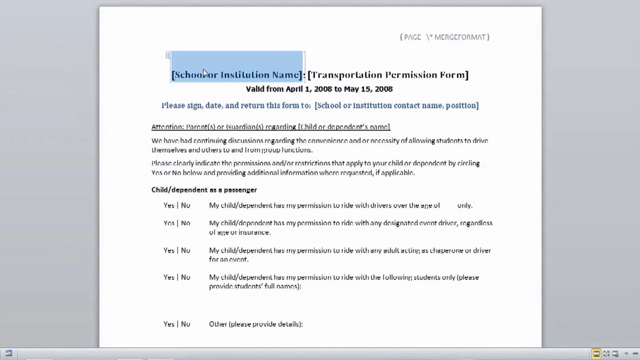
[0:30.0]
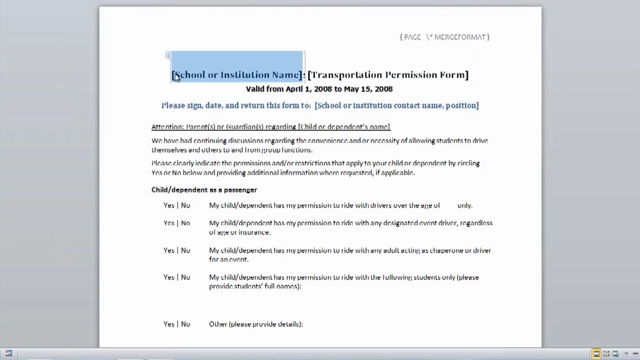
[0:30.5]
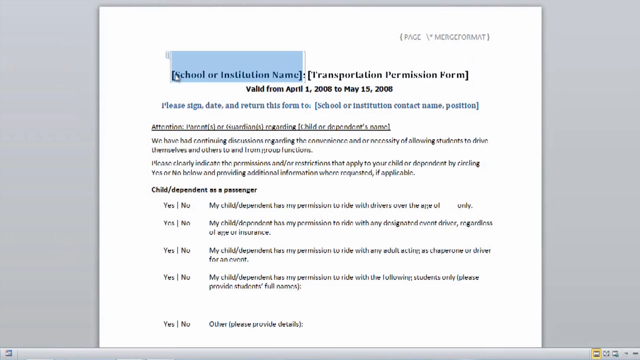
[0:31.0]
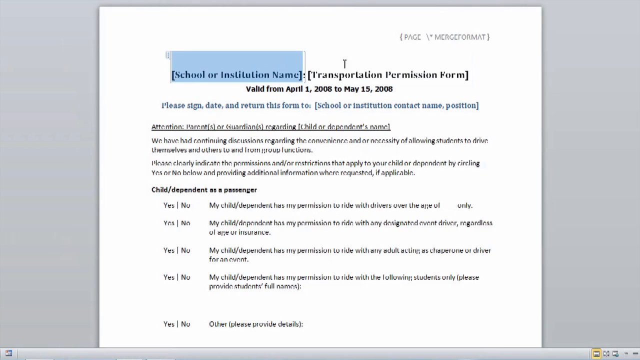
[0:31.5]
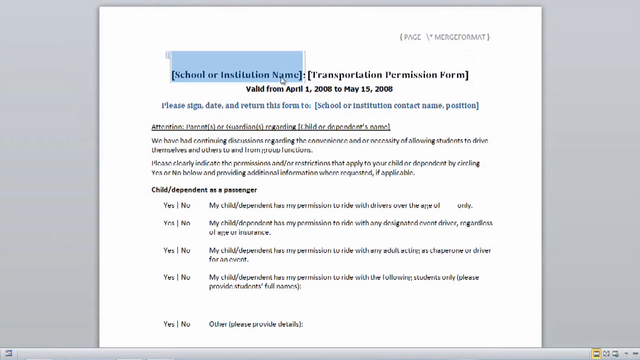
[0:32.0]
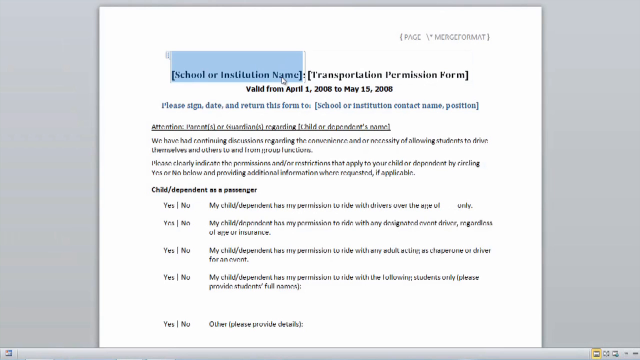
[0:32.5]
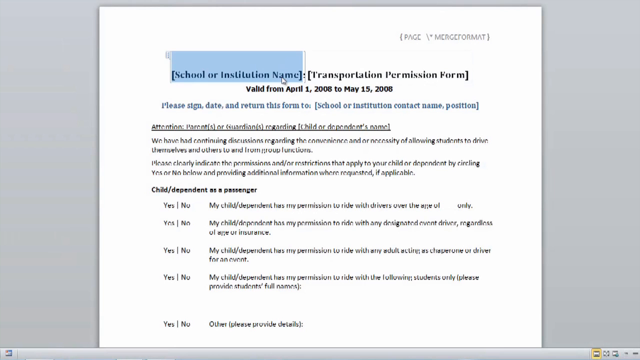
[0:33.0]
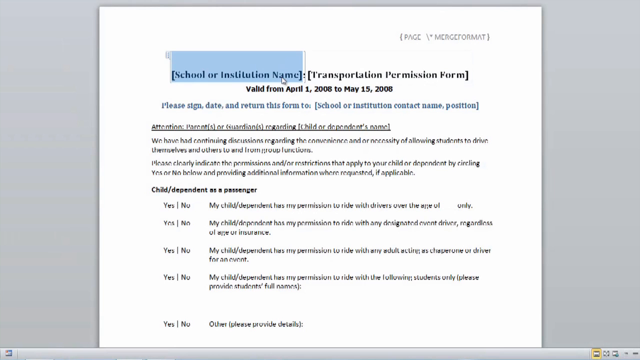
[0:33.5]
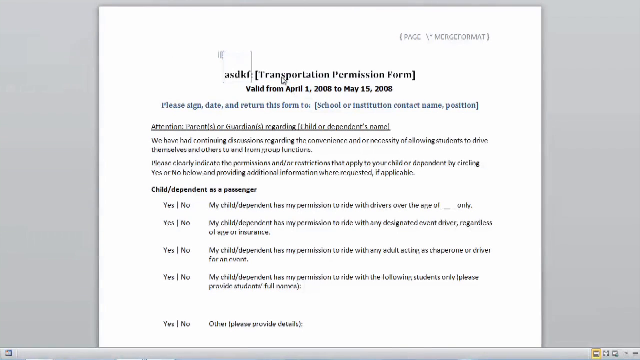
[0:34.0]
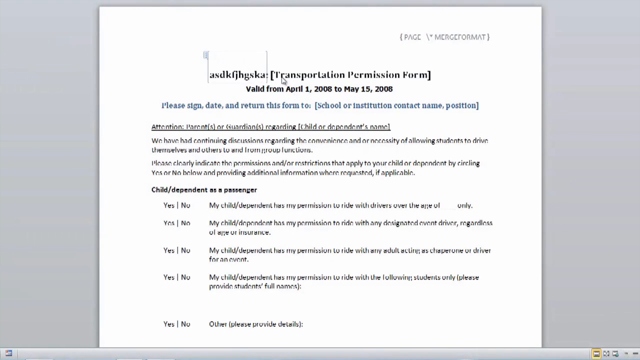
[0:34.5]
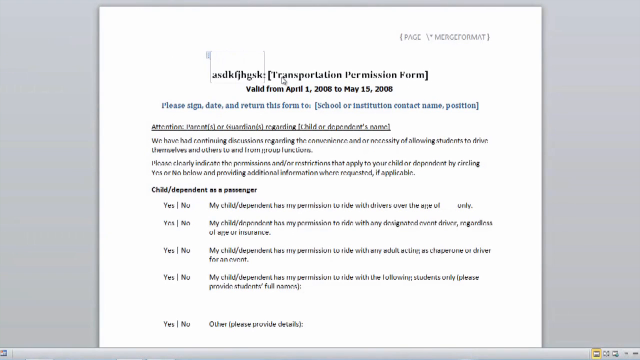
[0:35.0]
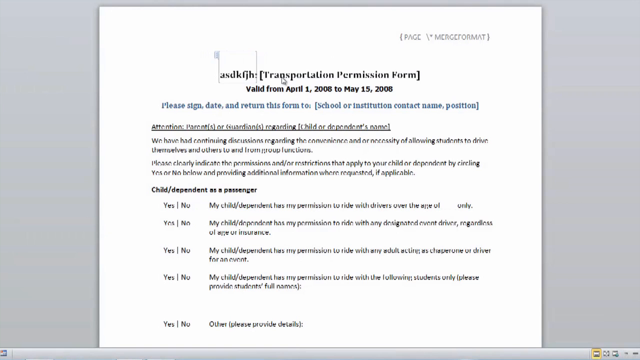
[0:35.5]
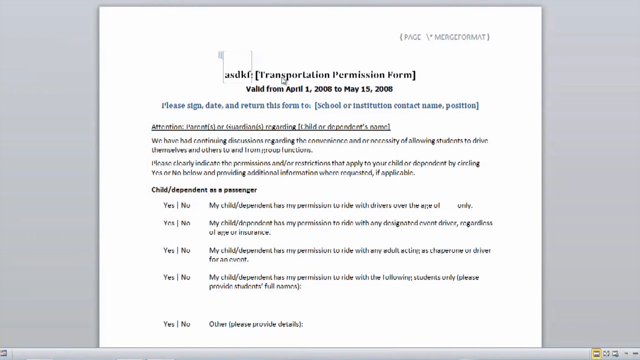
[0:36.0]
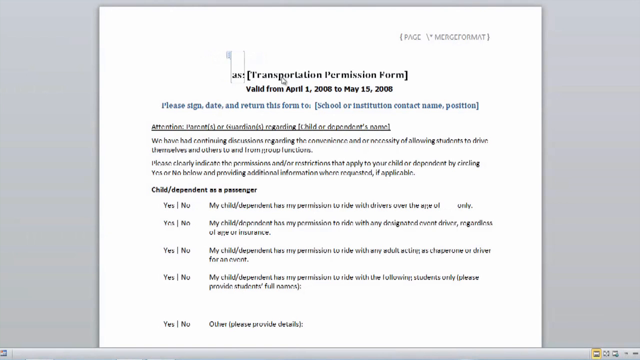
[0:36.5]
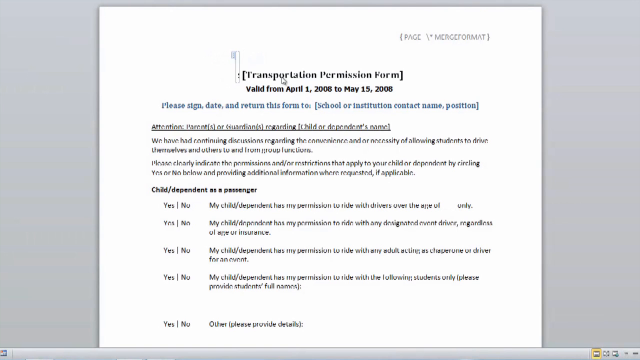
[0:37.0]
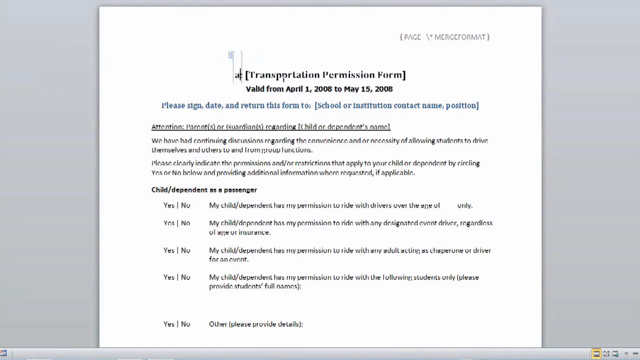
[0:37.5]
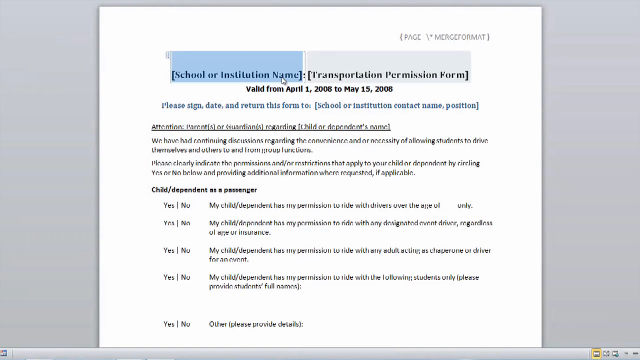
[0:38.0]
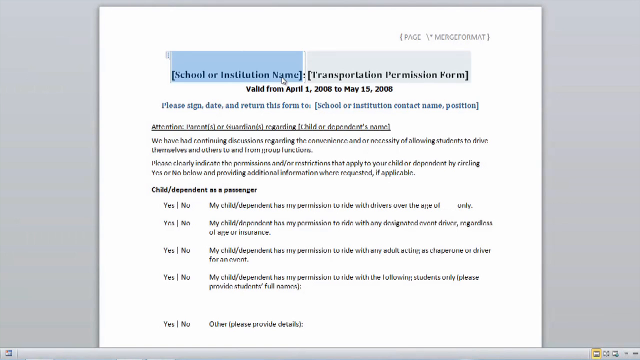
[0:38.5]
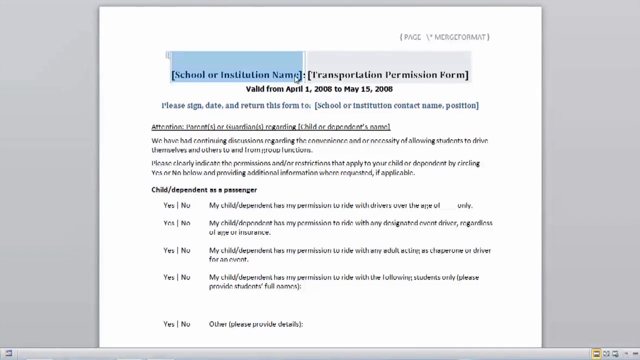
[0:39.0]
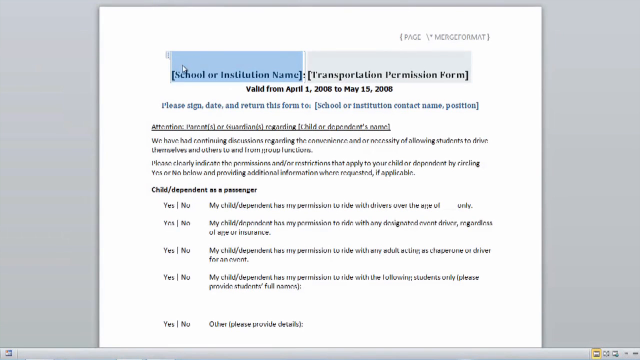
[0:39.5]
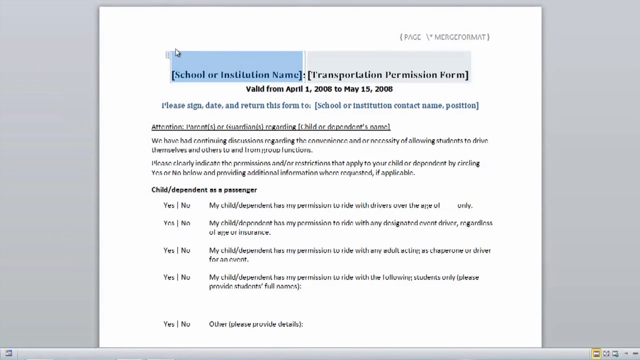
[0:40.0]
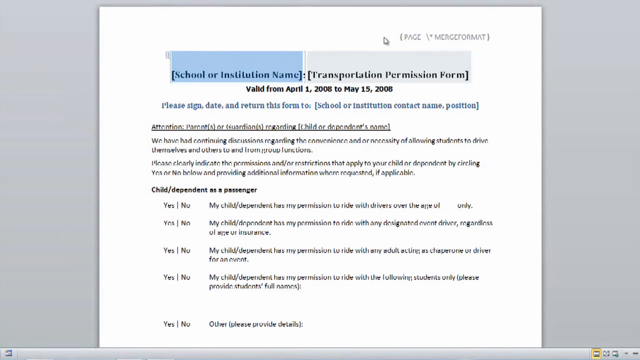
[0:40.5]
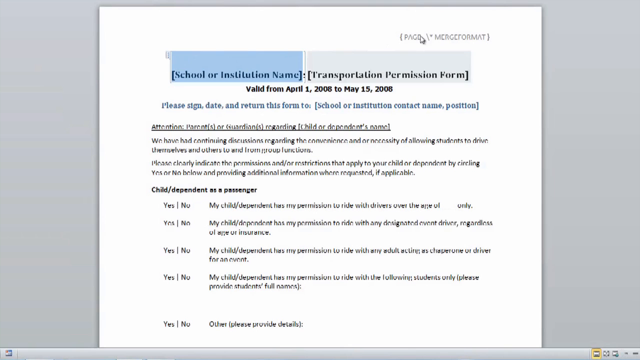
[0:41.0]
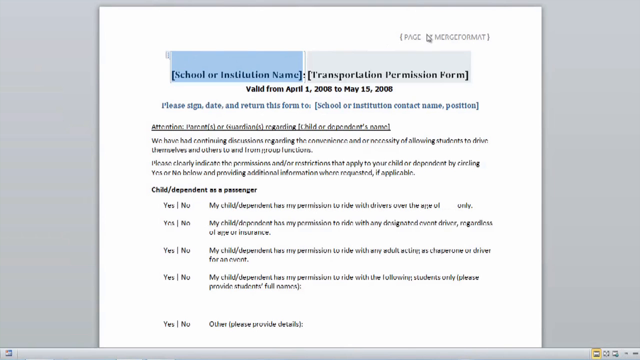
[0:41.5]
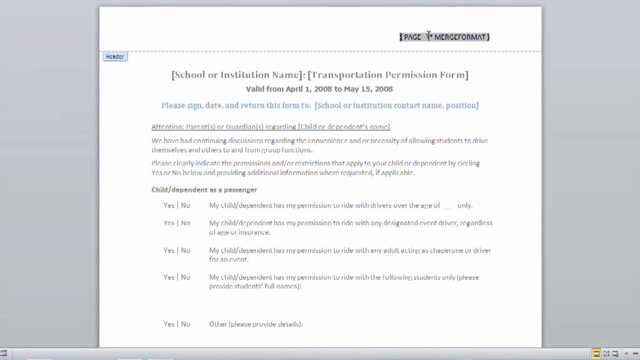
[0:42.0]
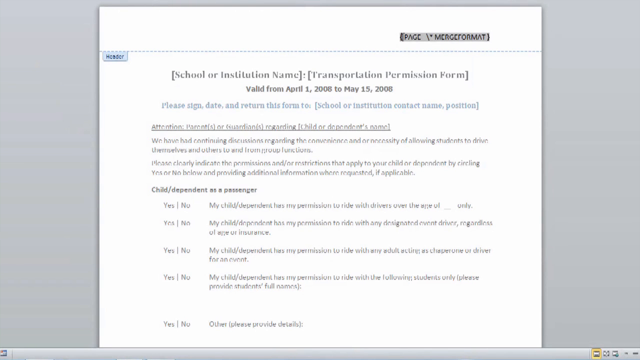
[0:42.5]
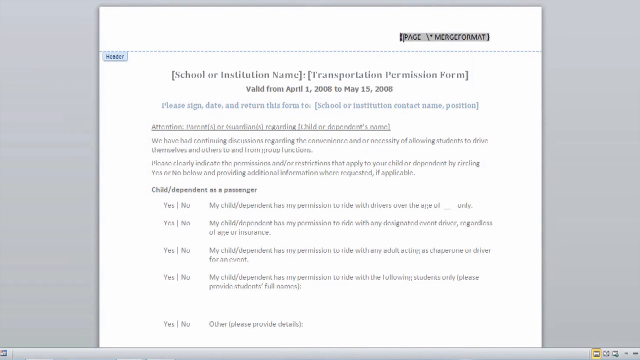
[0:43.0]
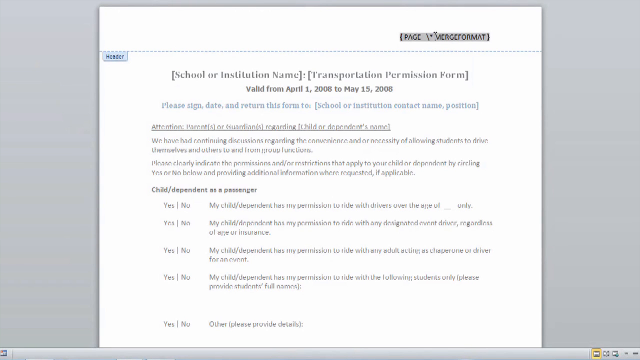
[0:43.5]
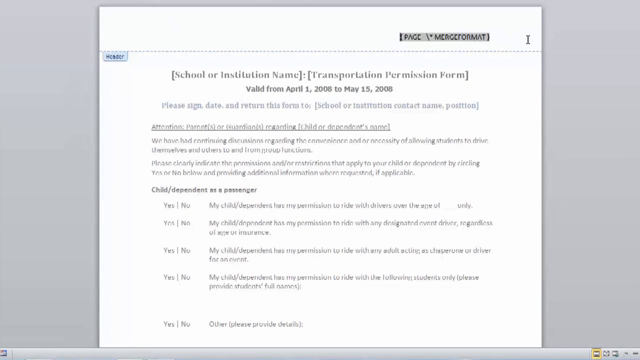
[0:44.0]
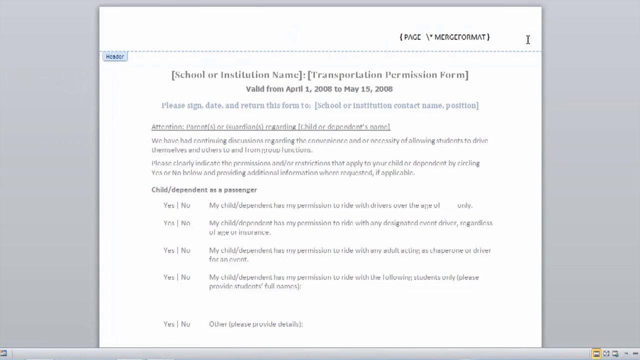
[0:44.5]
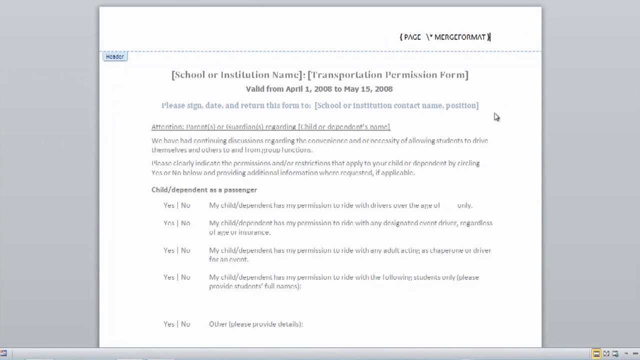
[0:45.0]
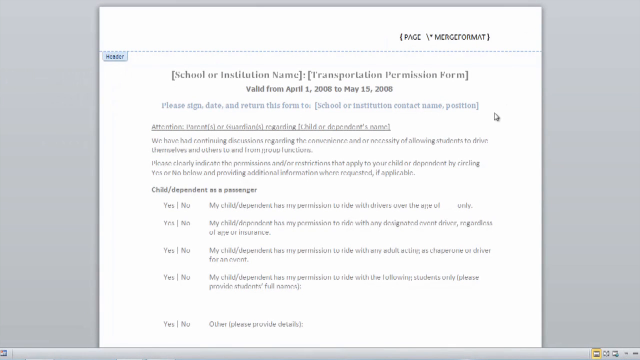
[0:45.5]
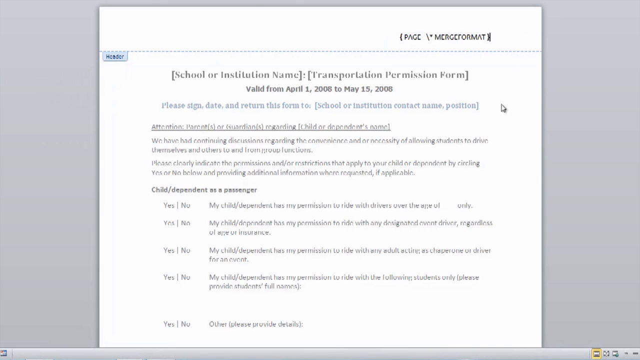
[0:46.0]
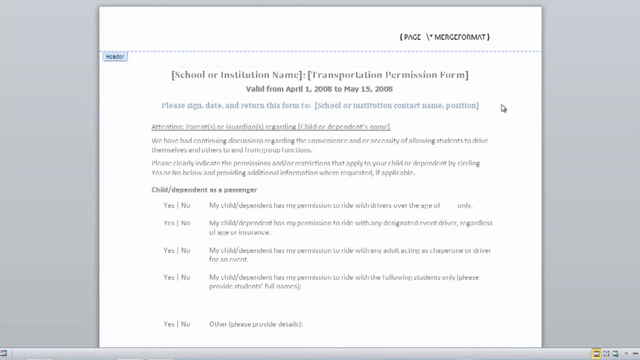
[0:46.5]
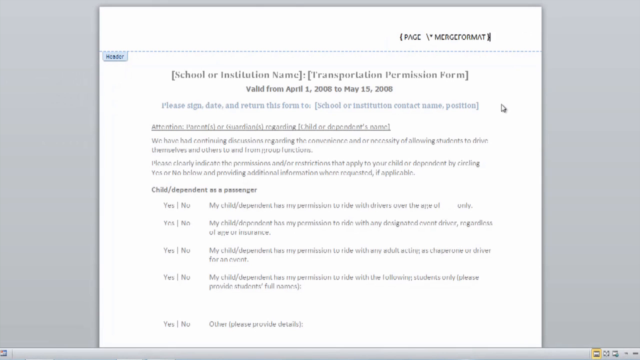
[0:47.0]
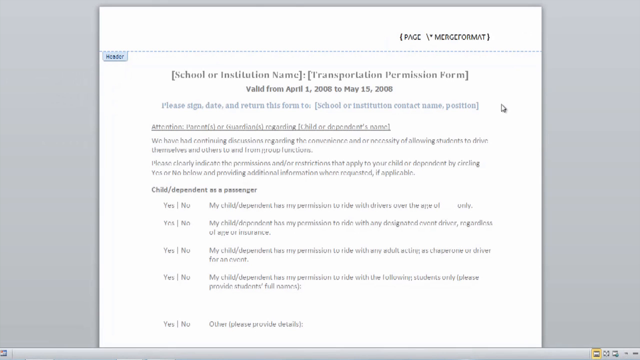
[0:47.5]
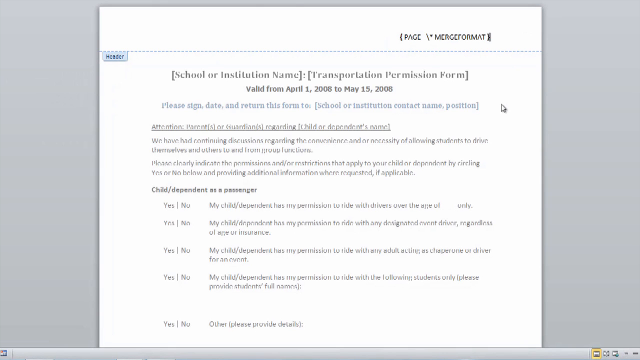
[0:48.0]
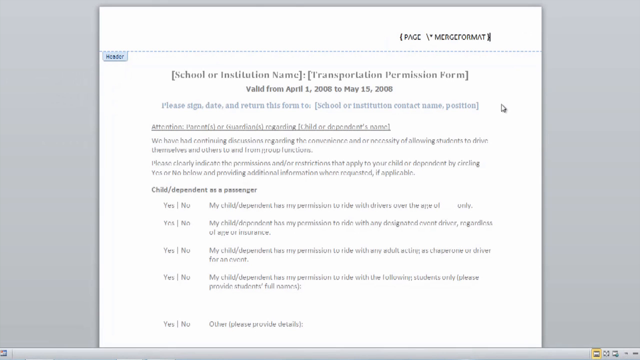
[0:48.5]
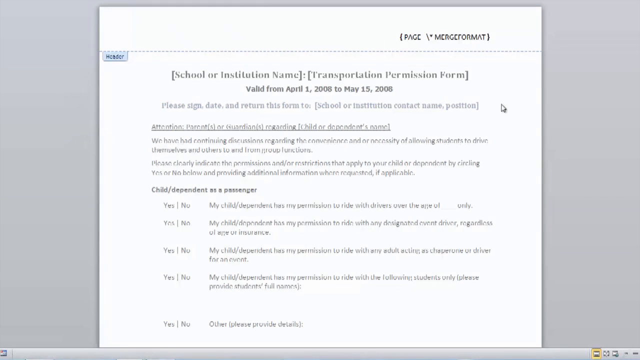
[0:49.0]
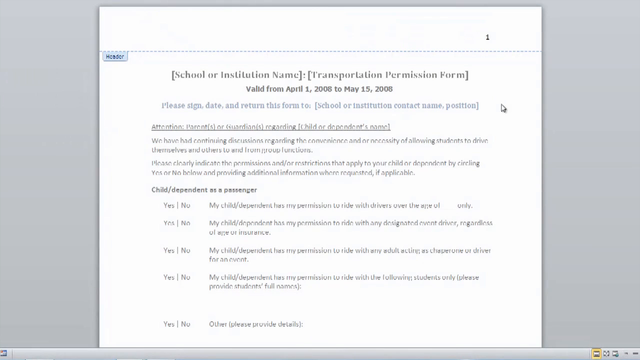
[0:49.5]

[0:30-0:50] In the Word document, the first field, which says "school or institution name", is highlighted in blue. The cursor is on this field, and suddenly a random string of letters is typed into that position. The user backspaces all of those letters, and then apparently undoes everything, since the original text reappears all at once. The mouse cursor circles around the school or institution name field, then moves to the top right-hand header section and clicks on the text there, highlighting all of it. The user clicks outside the text at the end of the field and types the number one, replacing everything that was there. The rest of the form contains text such as "please sign, date and return this form to" and a field that says "school or institution contact name position".